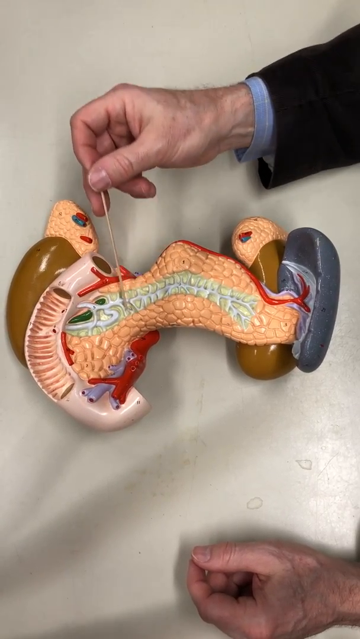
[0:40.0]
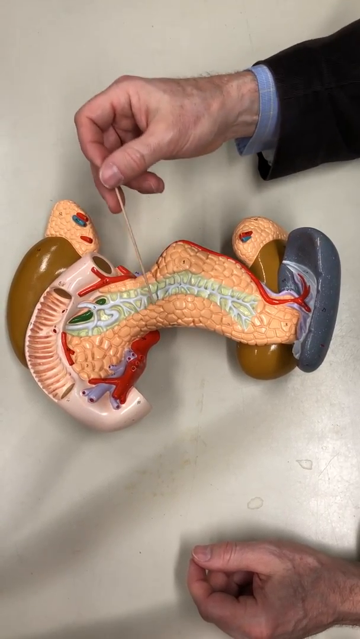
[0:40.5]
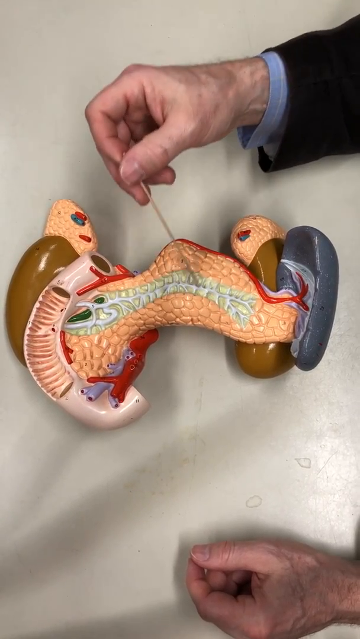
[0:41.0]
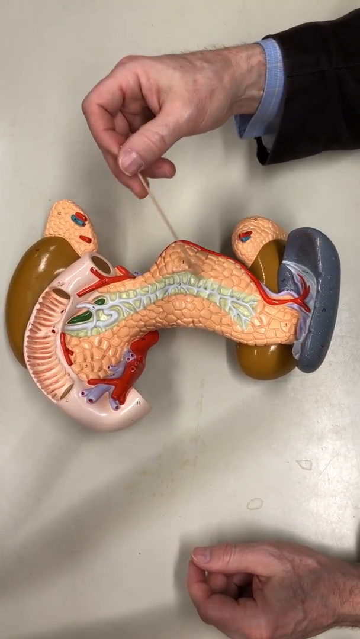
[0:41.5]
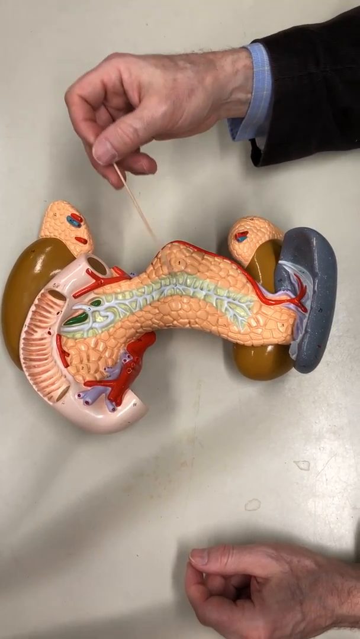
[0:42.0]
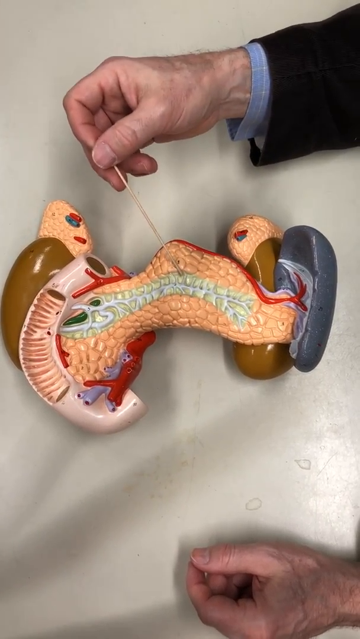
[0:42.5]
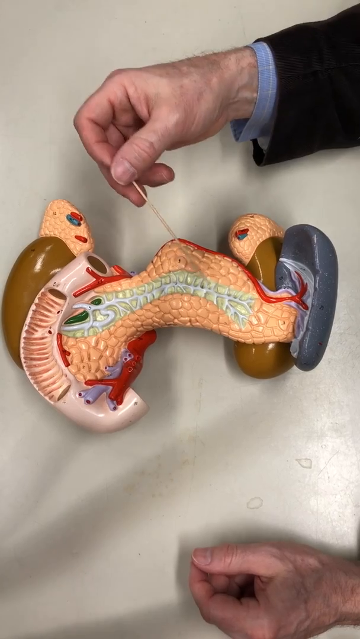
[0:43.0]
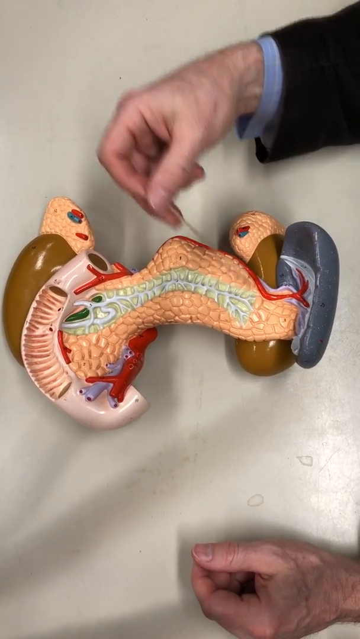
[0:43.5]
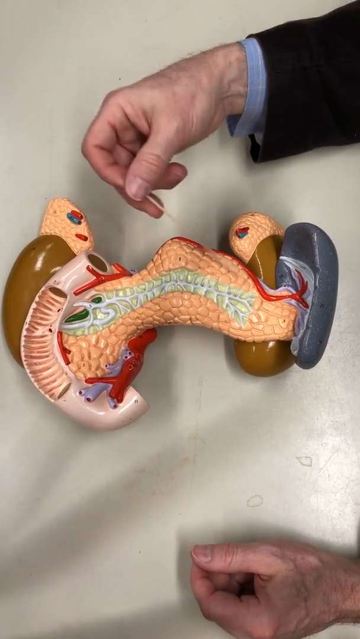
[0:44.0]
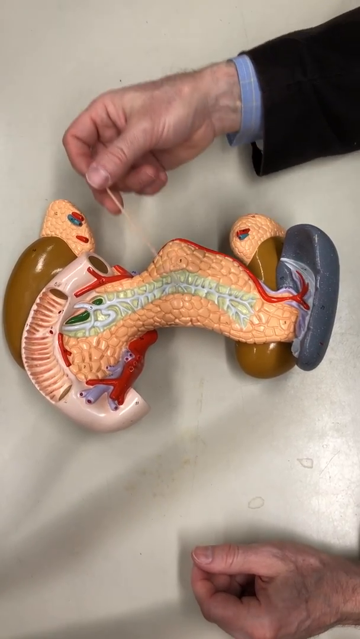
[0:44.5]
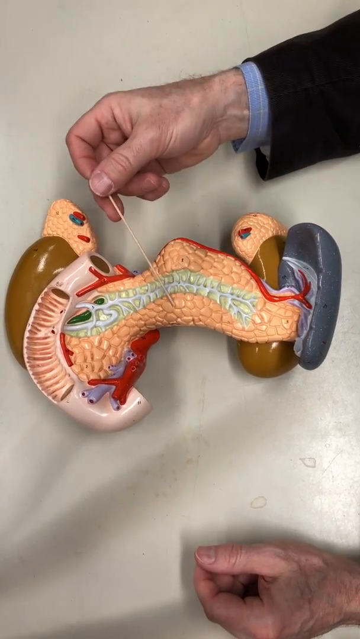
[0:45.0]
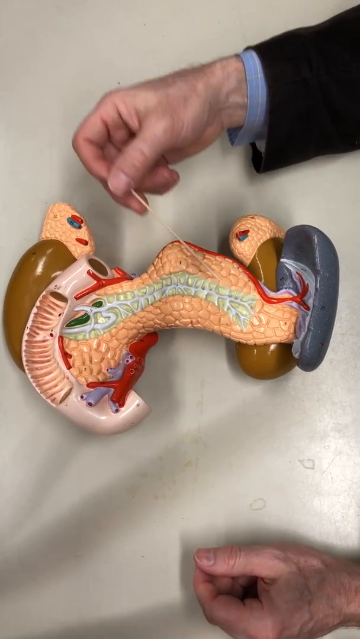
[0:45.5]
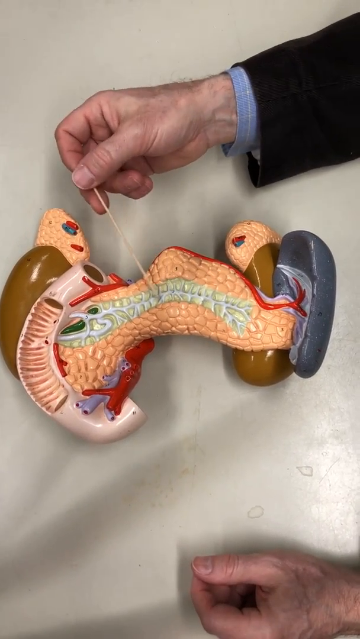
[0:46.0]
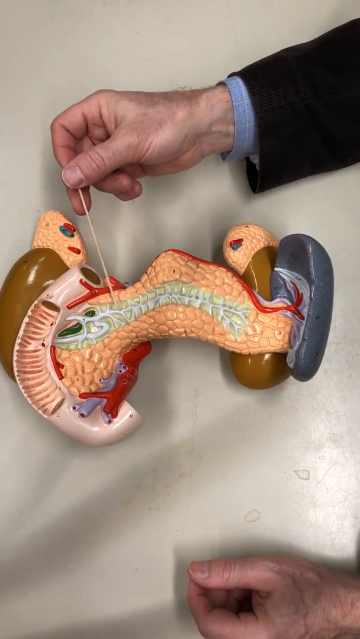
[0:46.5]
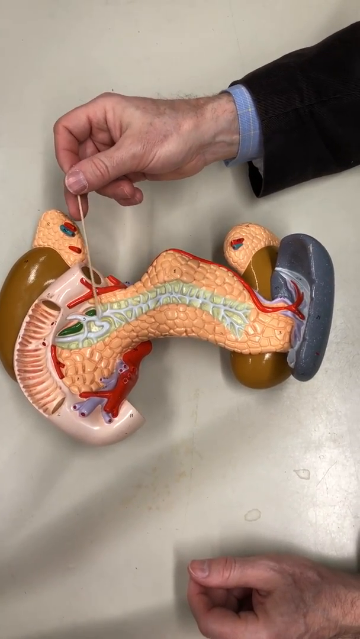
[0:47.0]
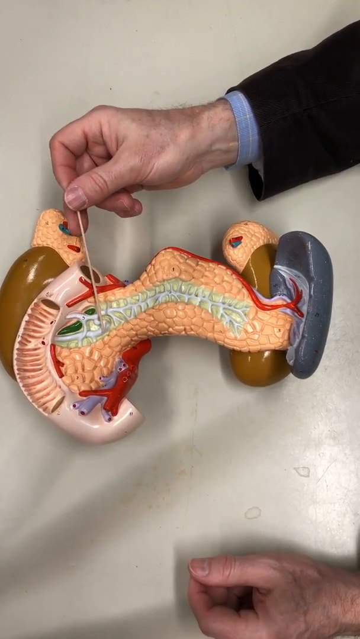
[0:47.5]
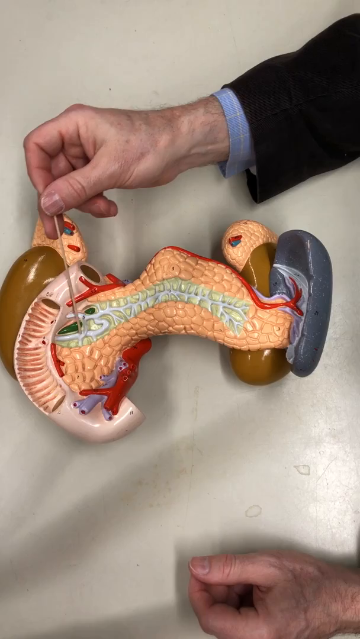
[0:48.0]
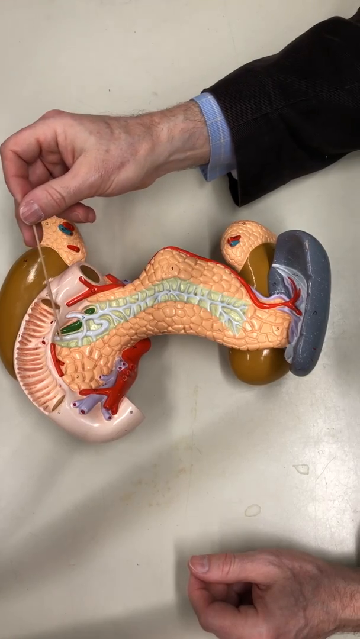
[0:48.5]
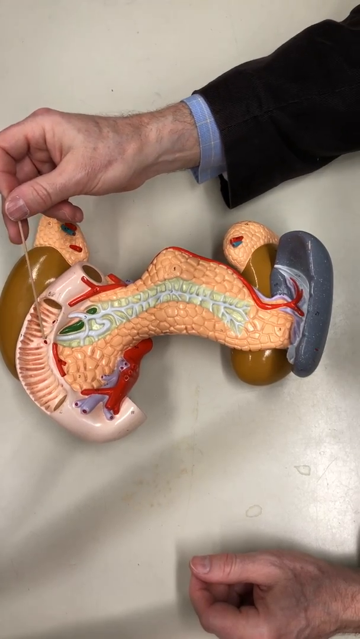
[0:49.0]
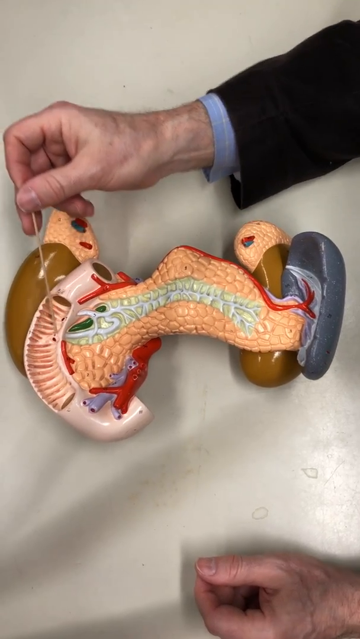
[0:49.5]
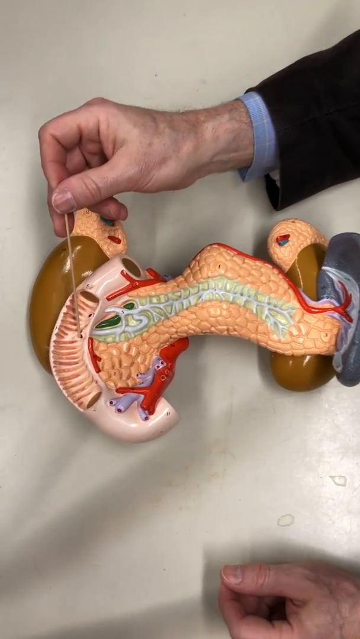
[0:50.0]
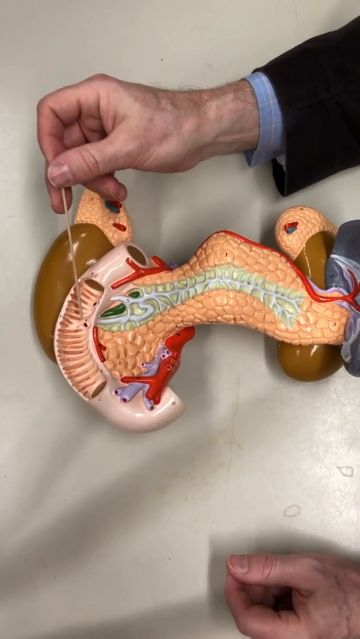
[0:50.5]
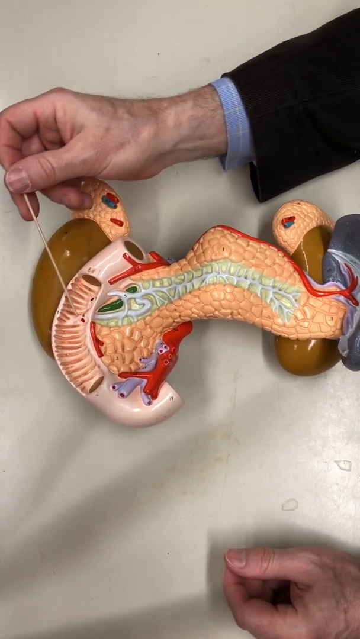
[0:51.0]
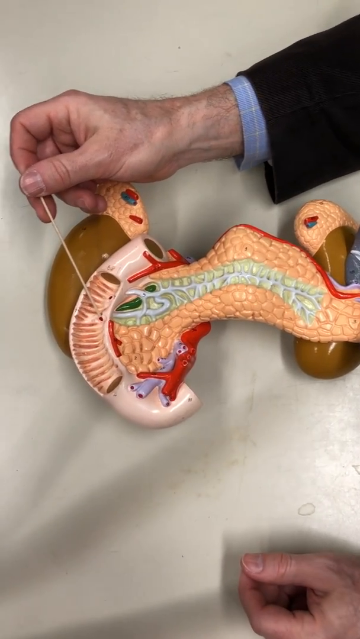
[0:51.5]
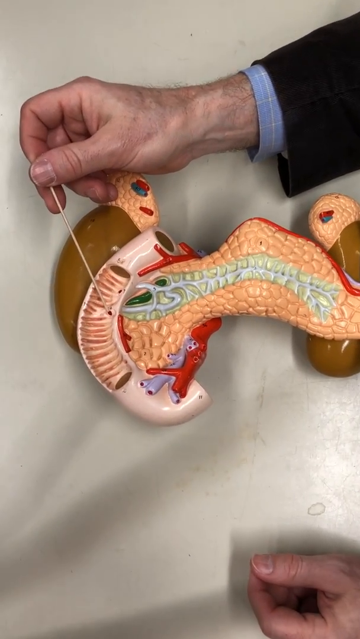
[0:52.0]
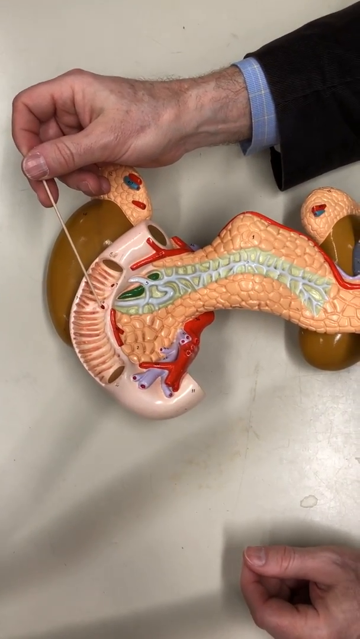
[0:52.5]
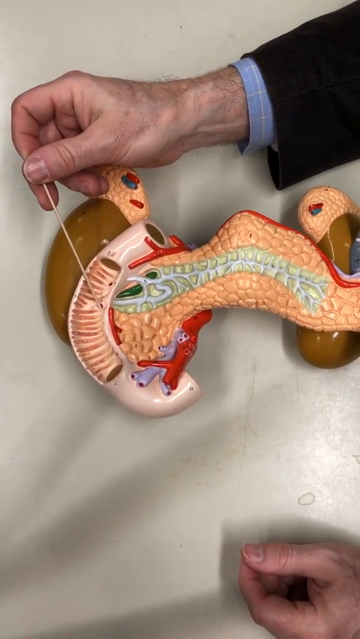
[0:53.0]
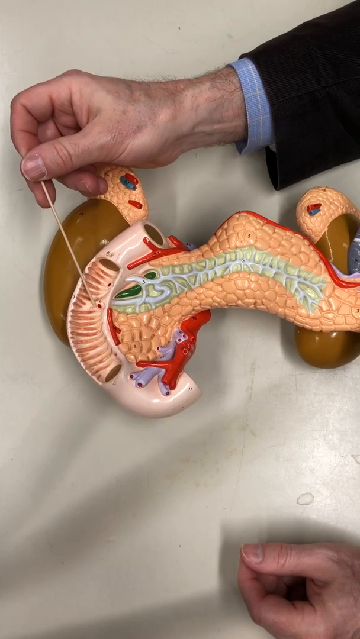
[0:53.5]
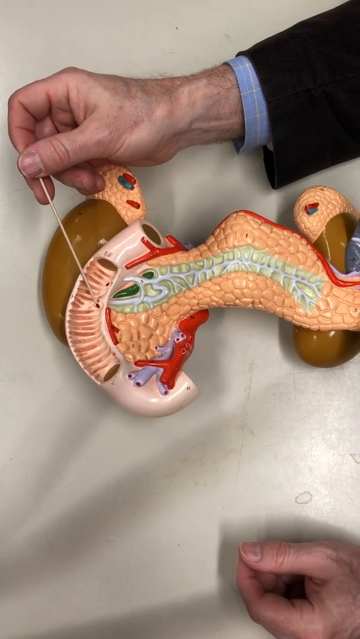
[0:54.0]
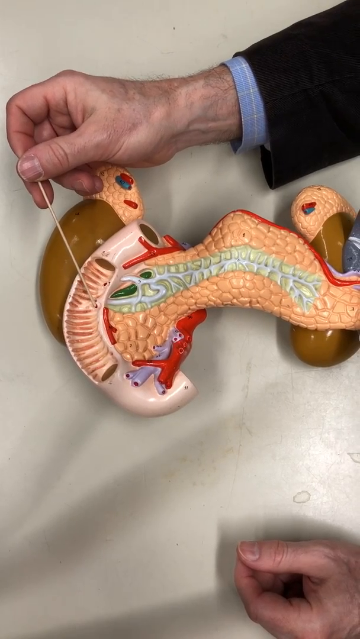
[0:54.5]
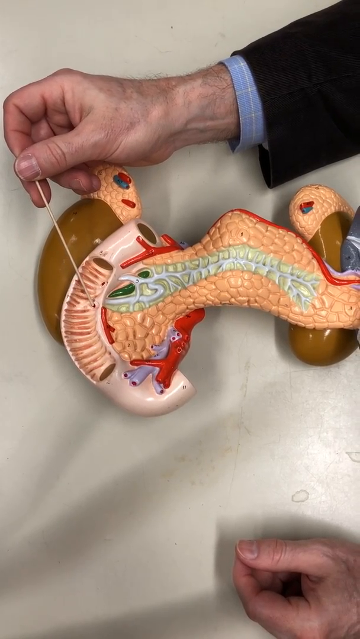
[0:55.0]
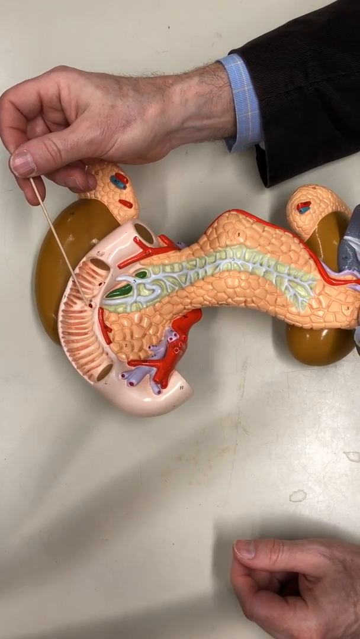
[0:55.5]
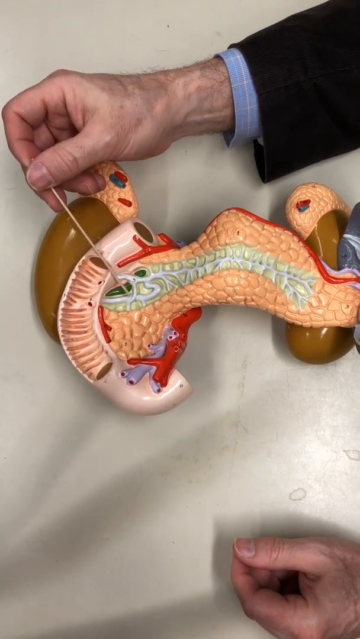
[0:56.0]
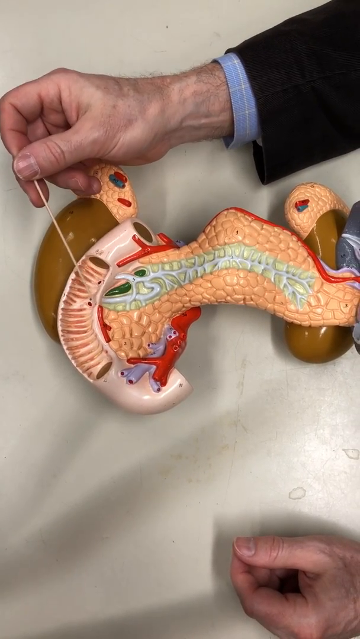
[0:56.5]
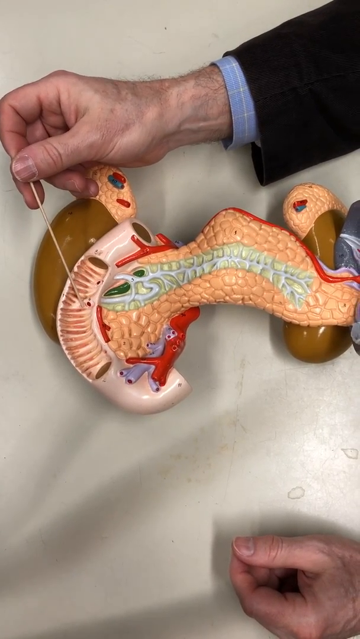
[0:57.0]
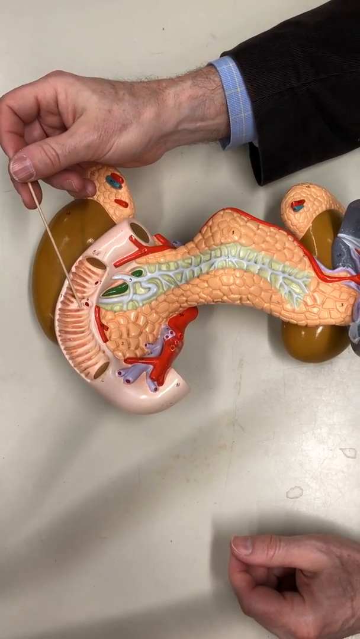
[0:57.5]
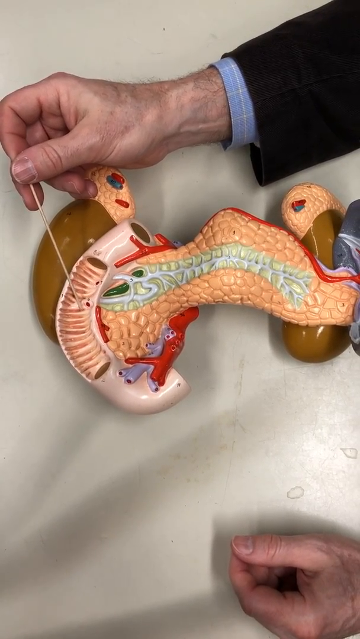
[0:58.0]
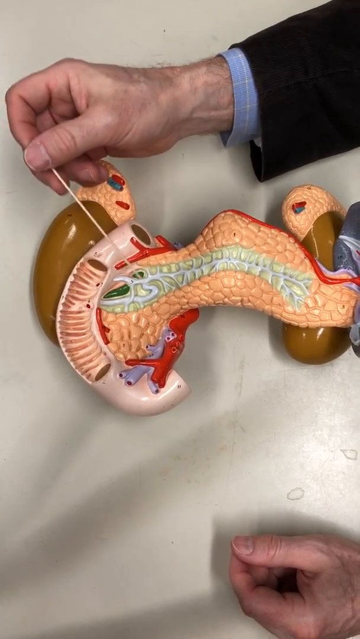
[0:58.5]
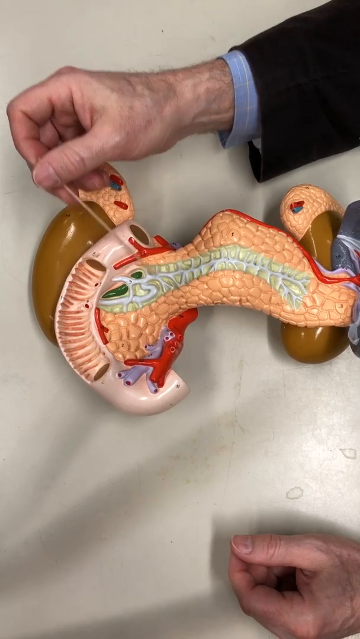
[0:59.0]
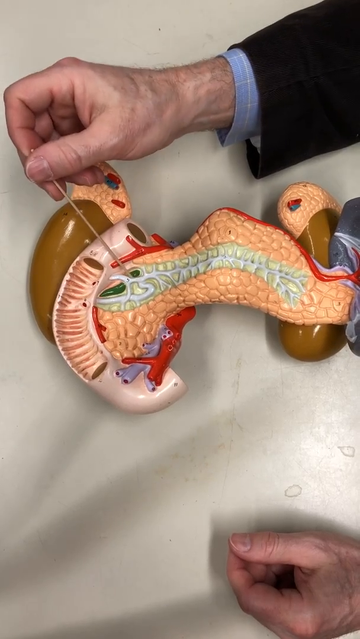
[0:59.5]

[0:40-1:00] The hand keeps pointing out the parts, moving up and down, and seems to point along each line of a valve that has lines running through it, as well as at the pores. It is unclear whether the object is a heart. The person holds a small stick that looks like a toothpick and uses it to point out the different pores, lines and other parts. He is apparently a teacher or lecturer teaching about the heart, but no class is visible, and neither is the teacher's whole body; only his hand appears, a male hand in black and blue, pointing at the heart model.